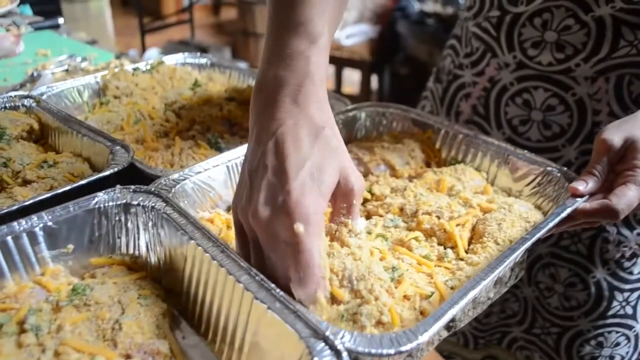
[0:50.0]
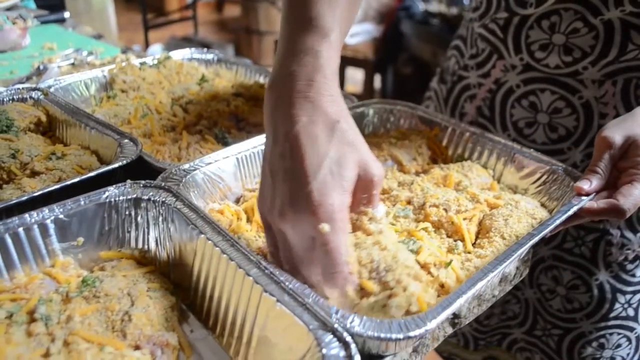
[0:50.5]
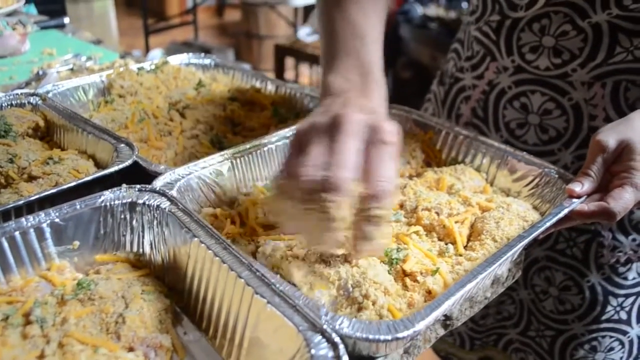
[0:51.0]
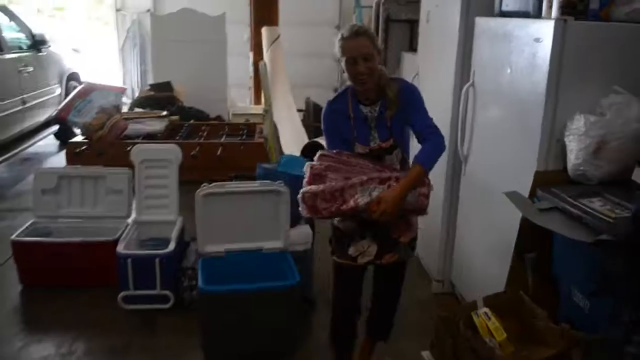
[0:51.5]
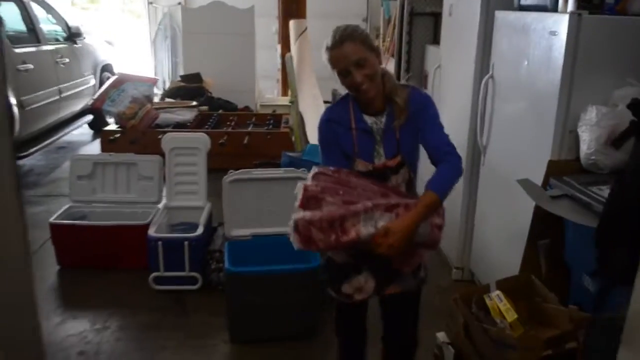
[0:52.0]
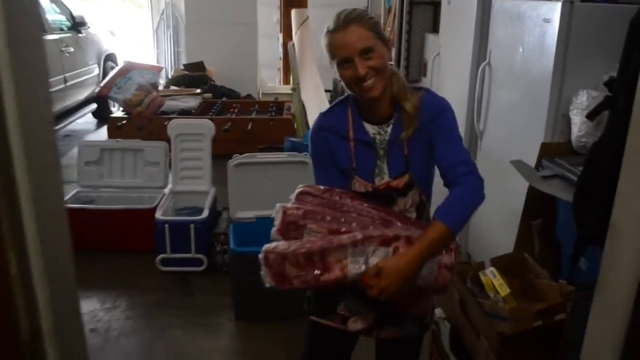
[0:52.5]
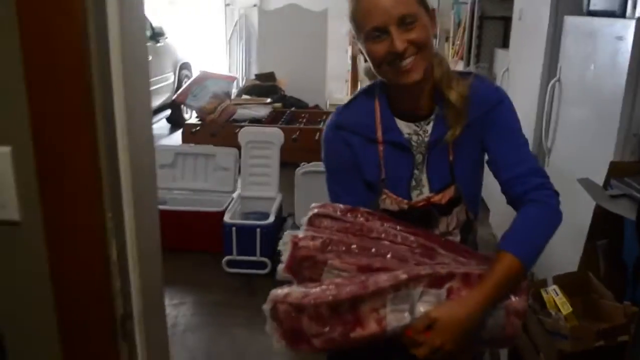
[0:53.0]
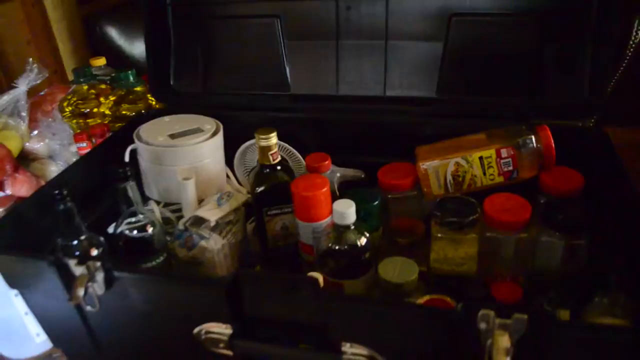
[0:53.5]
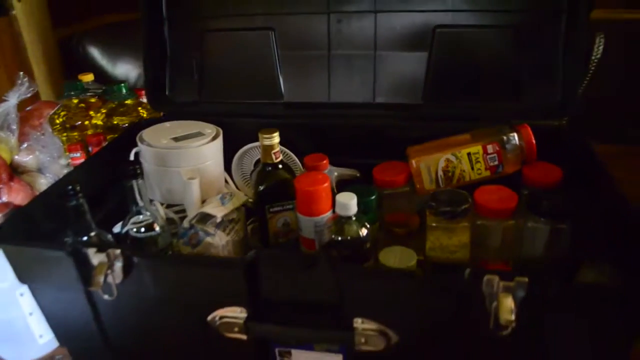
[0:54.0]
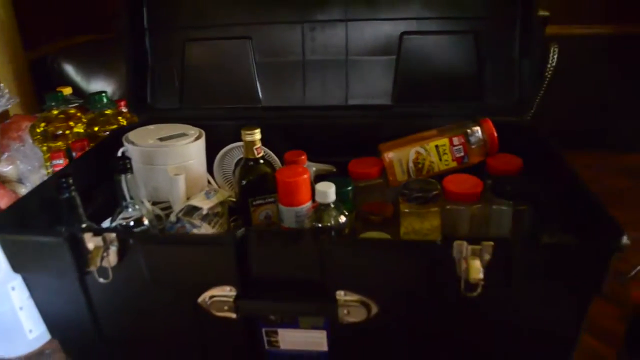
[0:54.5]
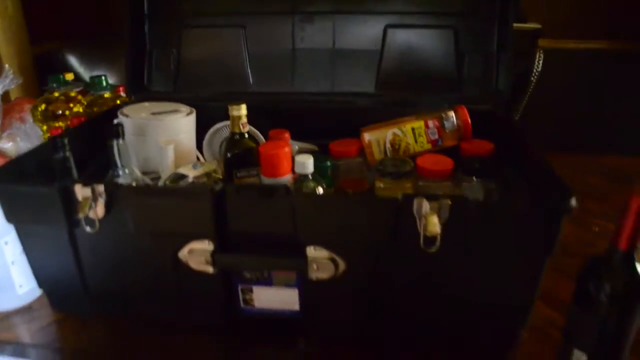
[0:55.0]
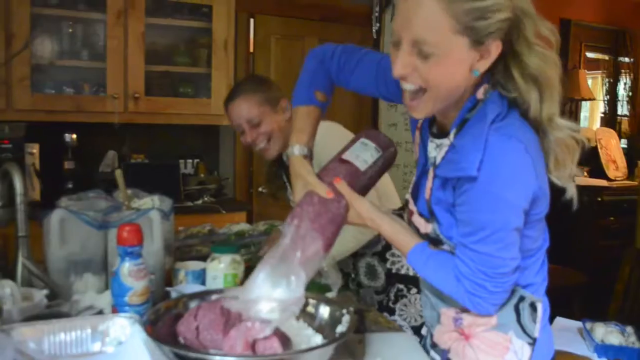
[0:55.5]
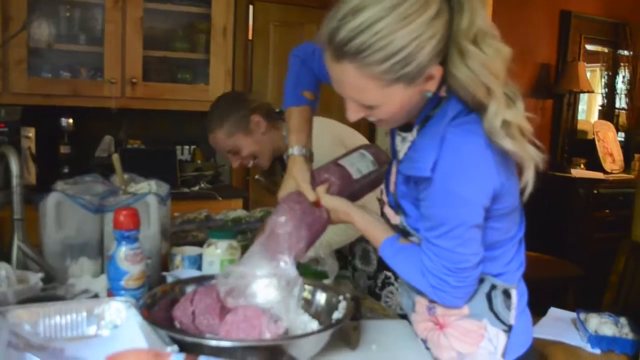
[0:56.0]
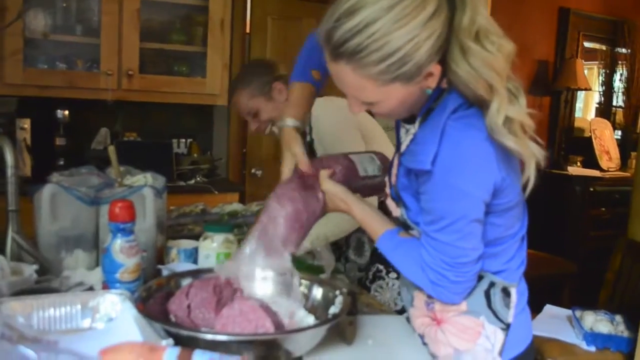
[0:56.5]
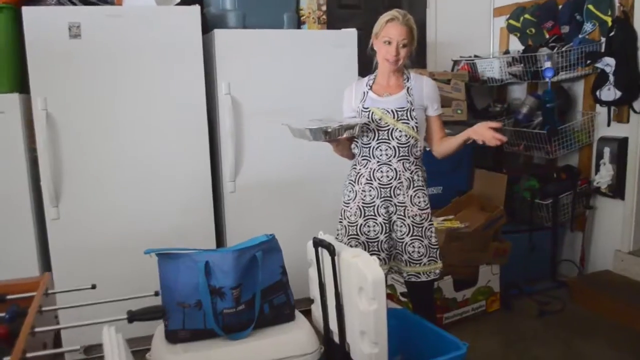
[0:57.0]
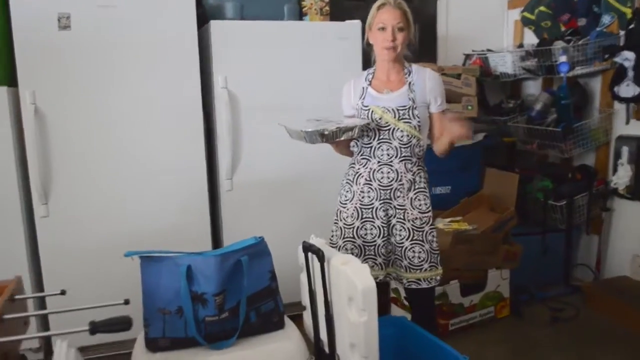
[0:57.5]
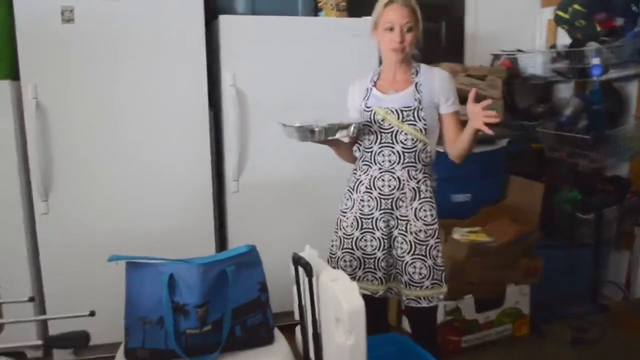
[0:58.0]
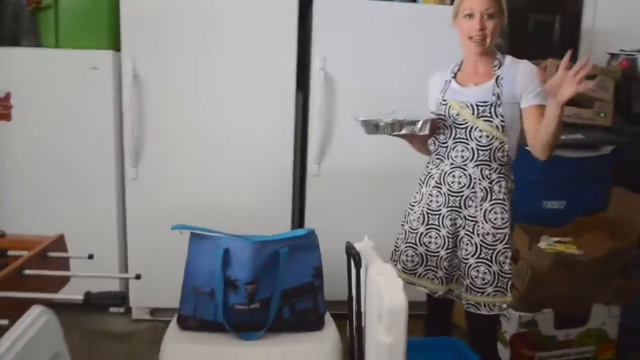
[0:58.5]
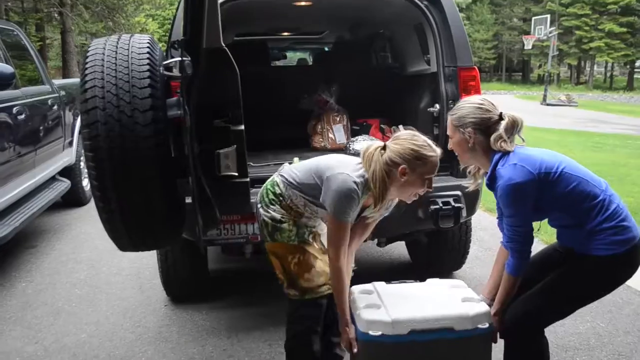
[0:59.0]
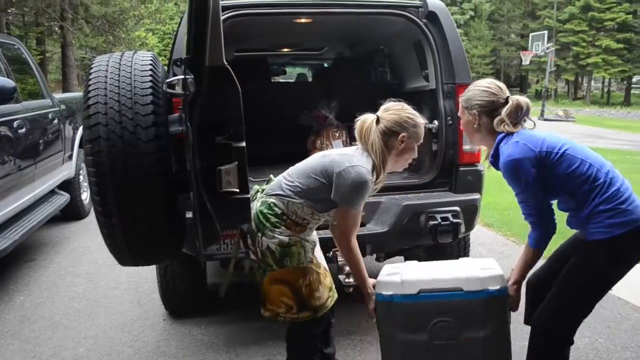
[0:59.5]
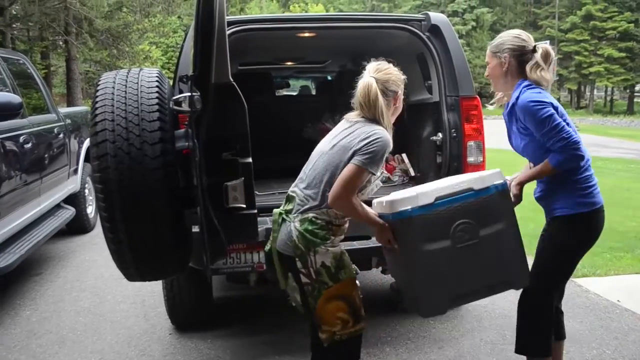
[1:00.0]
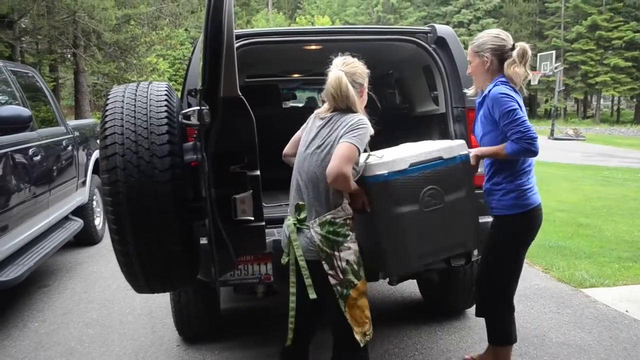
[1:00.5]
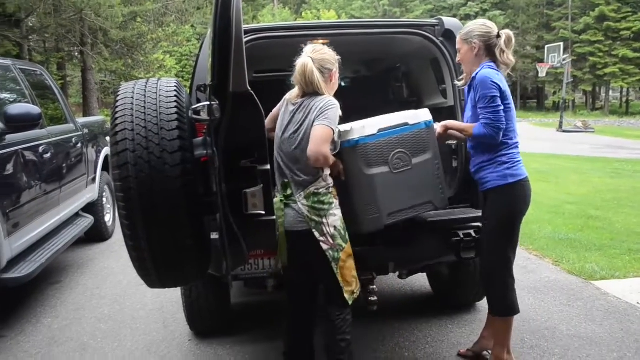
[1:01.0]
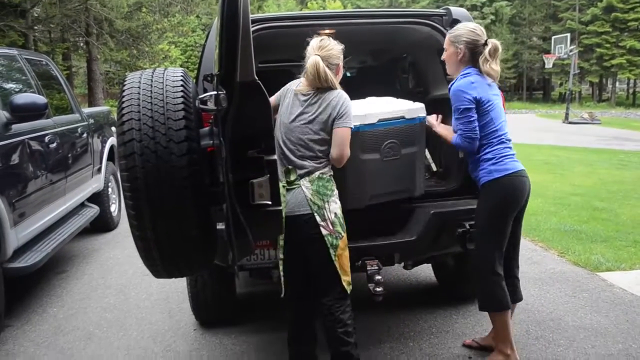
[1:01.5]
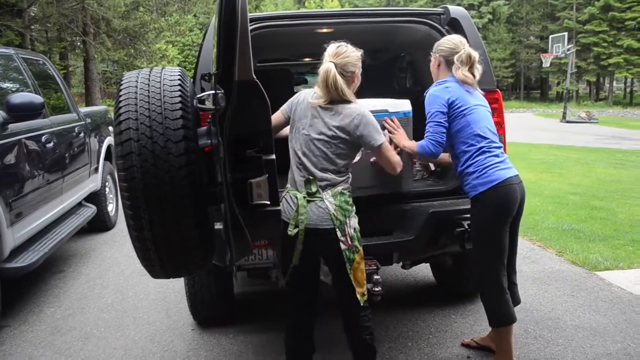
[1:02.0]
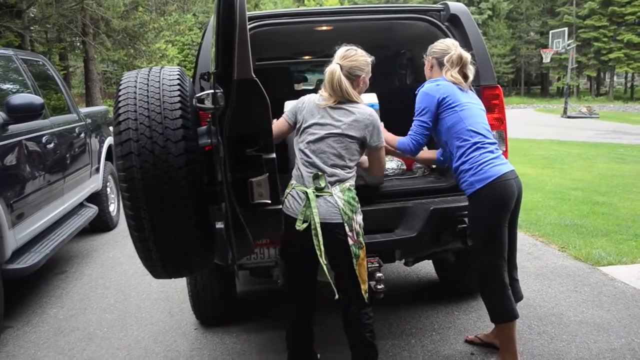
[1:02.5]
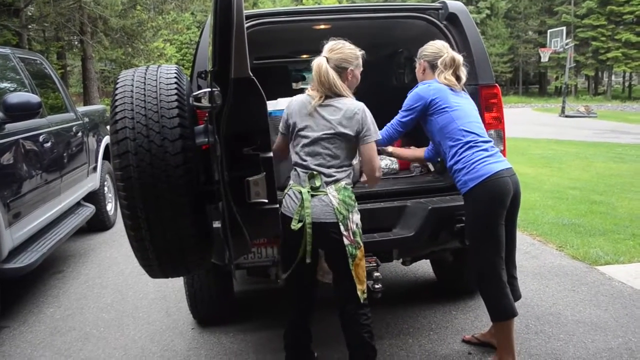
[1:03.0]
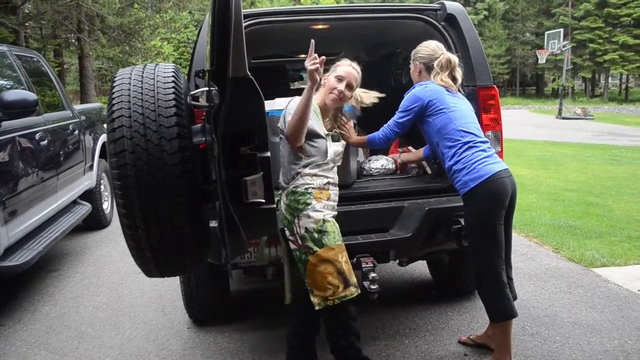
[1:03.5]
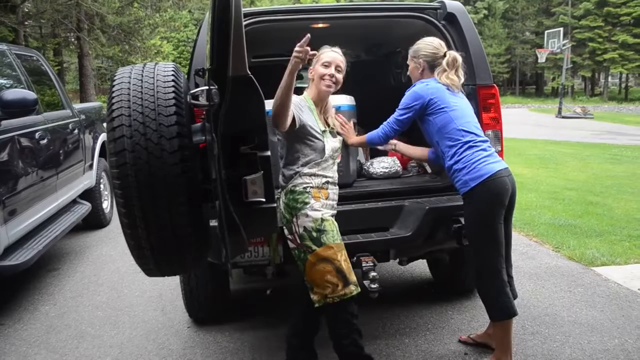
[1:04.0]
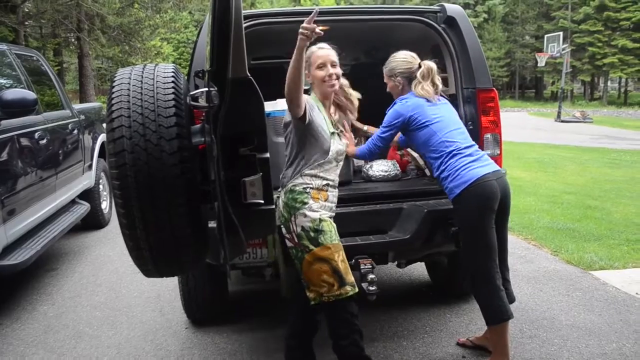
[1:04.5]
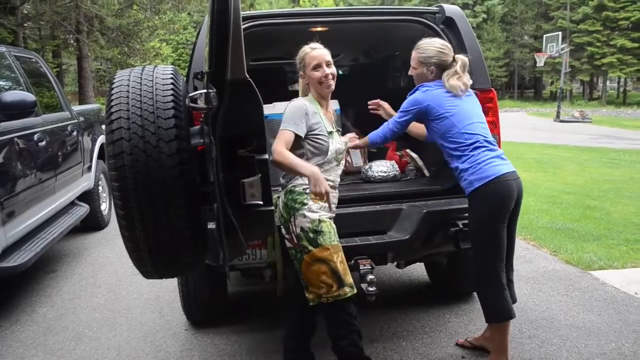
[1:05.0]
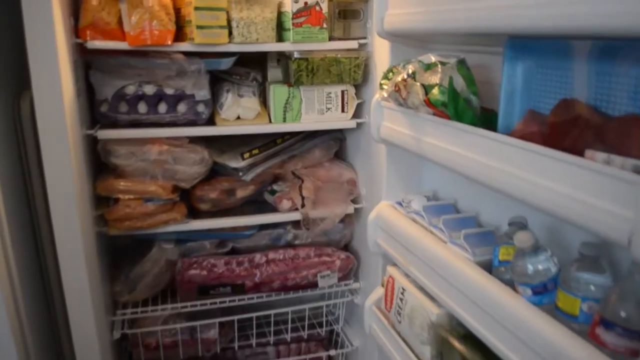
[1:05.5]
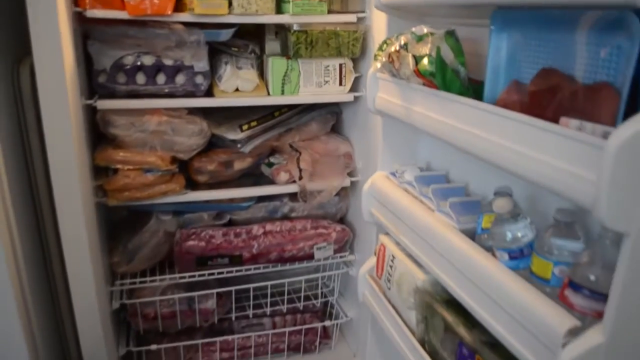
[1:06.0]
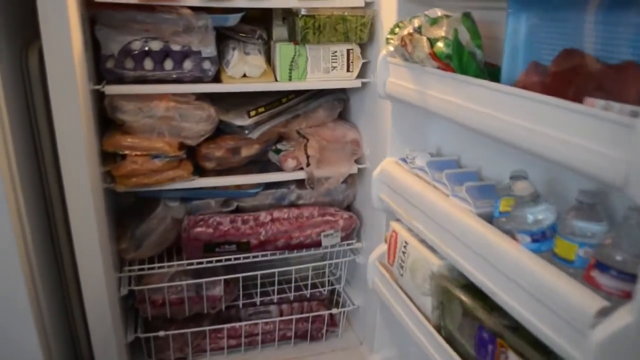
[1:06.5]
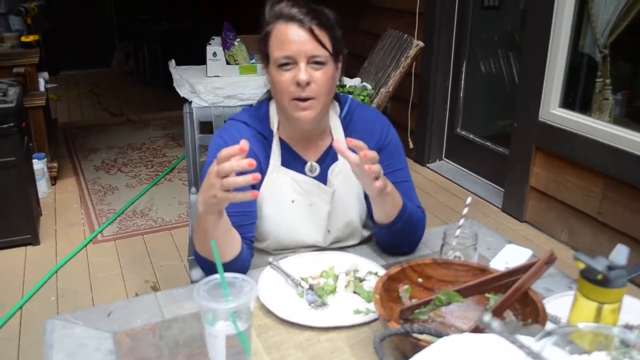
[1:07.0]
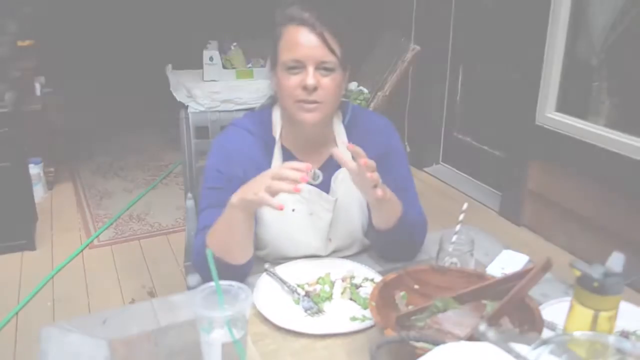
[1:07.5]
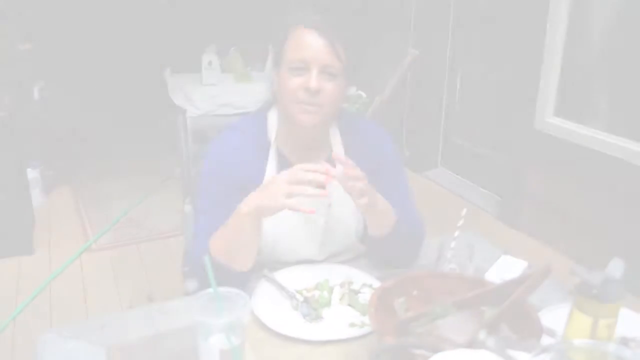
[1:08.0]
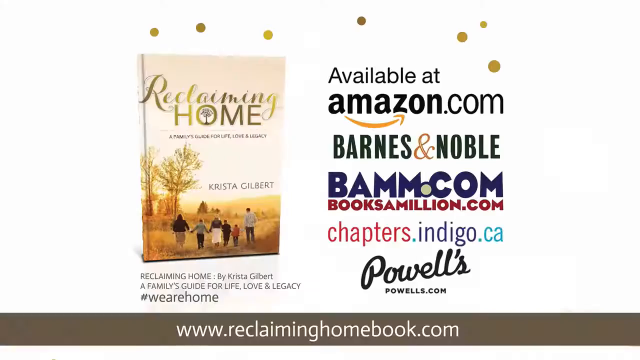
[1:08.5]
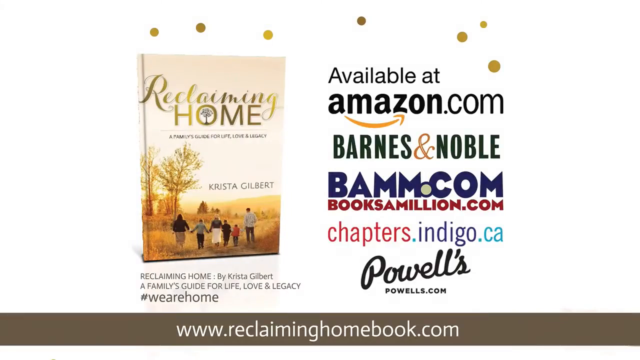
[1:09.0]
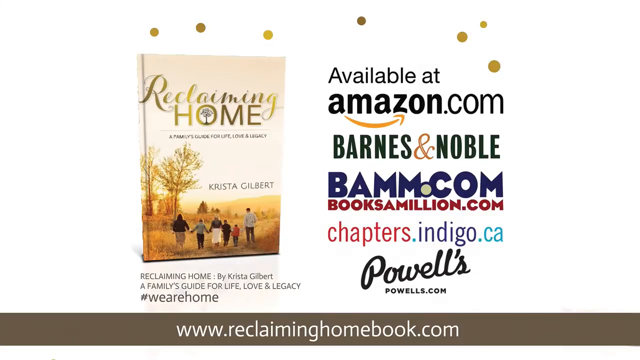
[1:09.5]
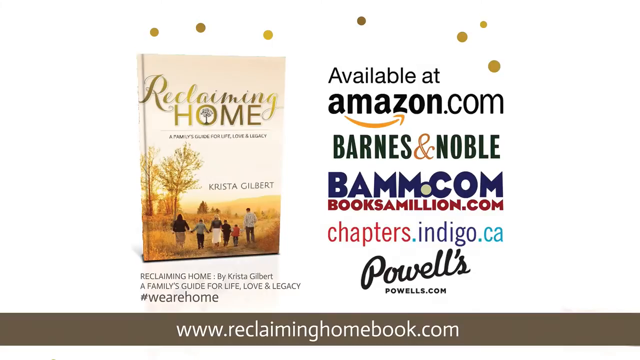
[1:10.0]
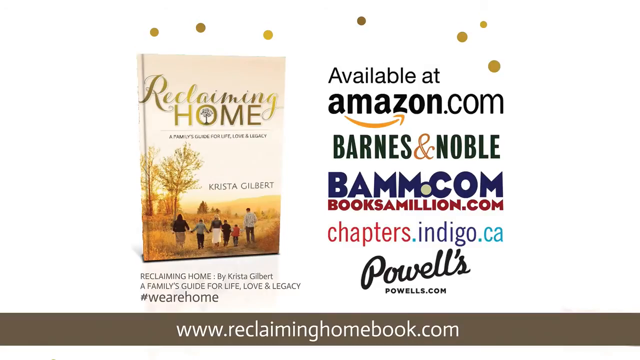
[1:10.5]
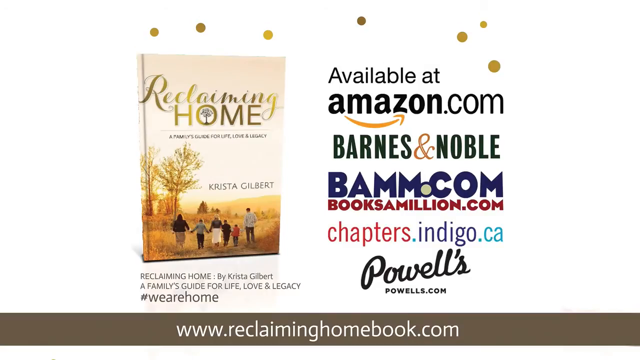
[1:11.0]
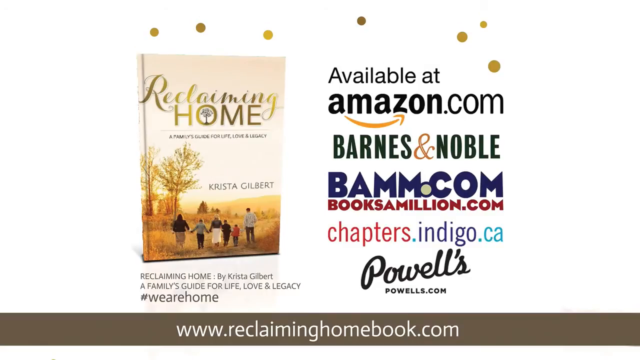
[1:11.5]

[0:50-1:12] A woman wears a red lanyard on her neck and carries three big packs of beef. Coolers are on the floor, two blue and one red, and there are two freezers. A car is outside, and sunlight shows it is daytime. She carries all the meat in. A big black box is shown, along with oils, wine and different kinds of items. The meat is taken out of the bag. Another woman with a tray stands by the three freezers in the garage. A big blue and gray cooler is put into the black Jeep. The inside of the freezer is shown filled with meat. A woman sits at a table wearing a blue sweatshirt with a white apron over it, with a little folding table behind her. There is a cup with a red and white straw, a plate with a little bit of salad, a to-go cup from a restaurant in front of her with a green straw, and a big brown bowl of salad with brown tongs. Then text reads "Reclaiming Home", a book by Krista Albert, and says "available at amazon.com, barnesandnoble, bam.com, booksamillion.com".